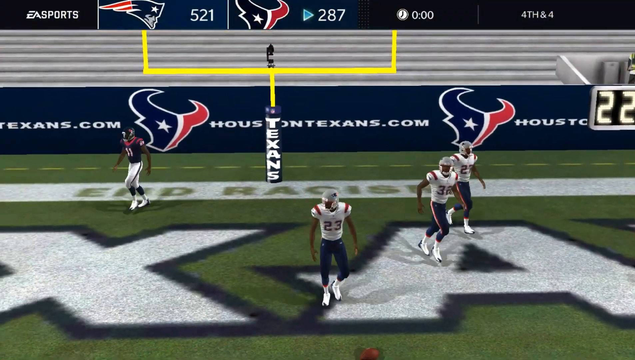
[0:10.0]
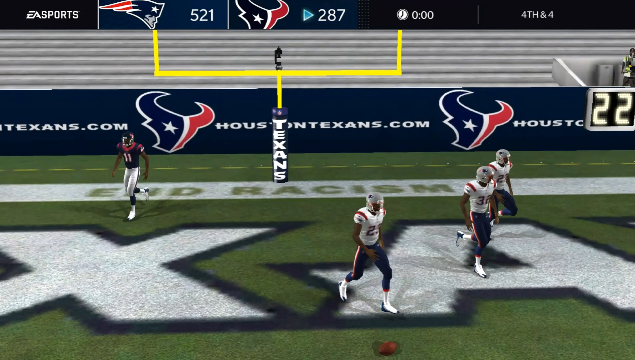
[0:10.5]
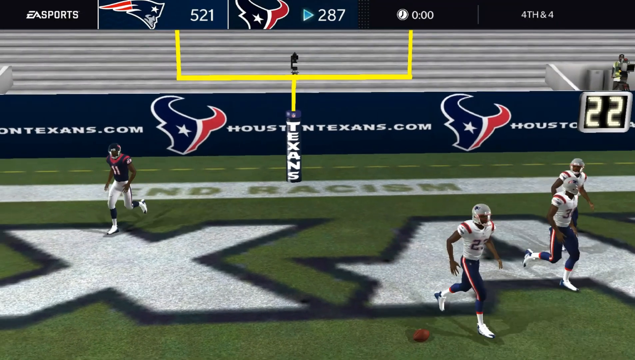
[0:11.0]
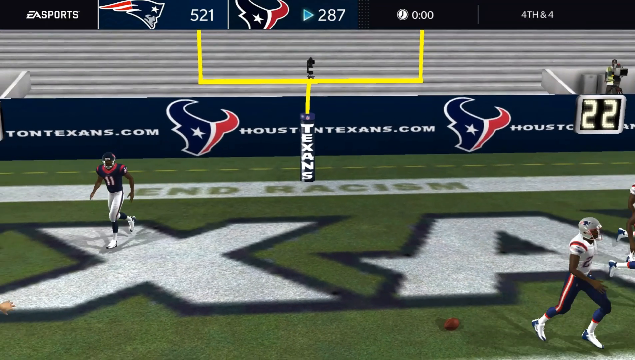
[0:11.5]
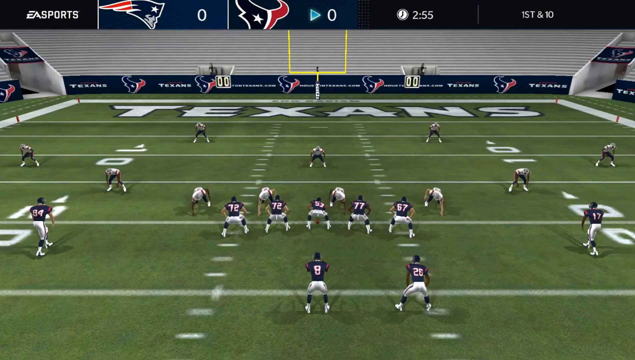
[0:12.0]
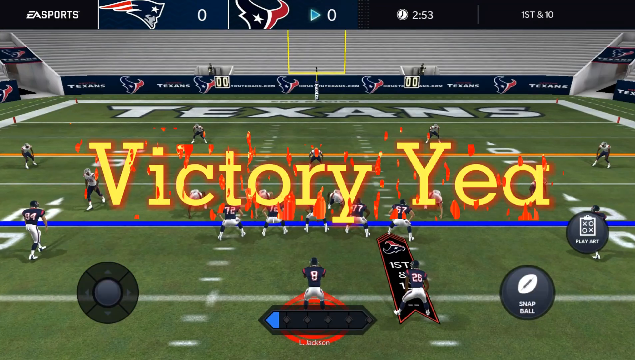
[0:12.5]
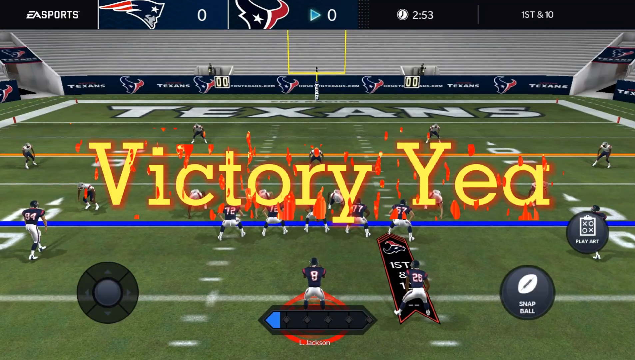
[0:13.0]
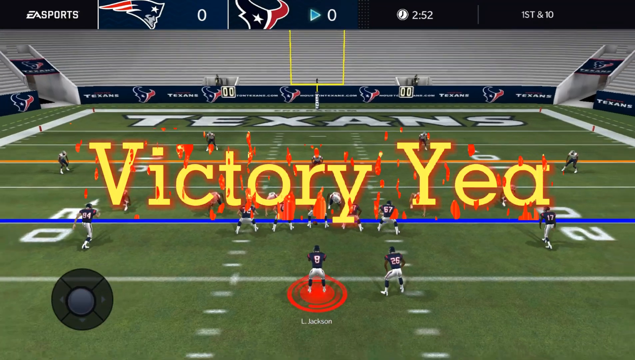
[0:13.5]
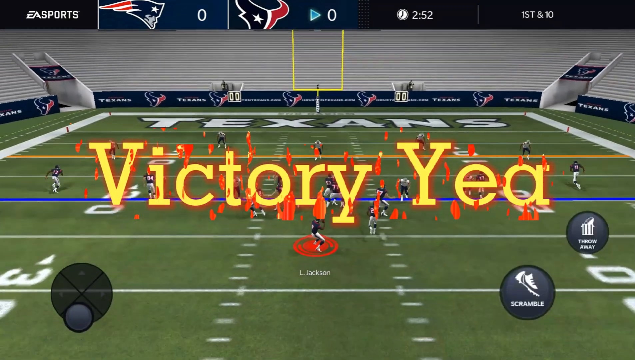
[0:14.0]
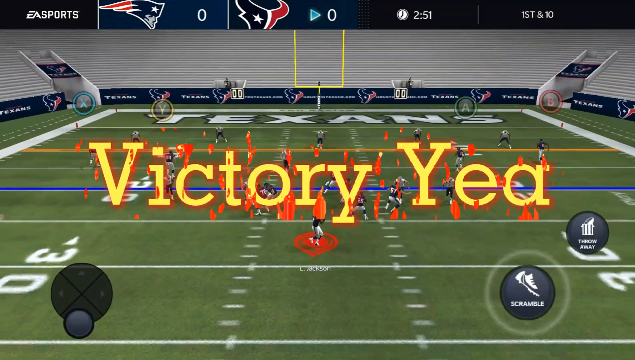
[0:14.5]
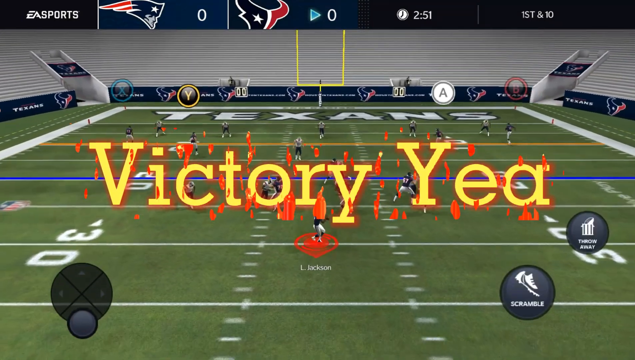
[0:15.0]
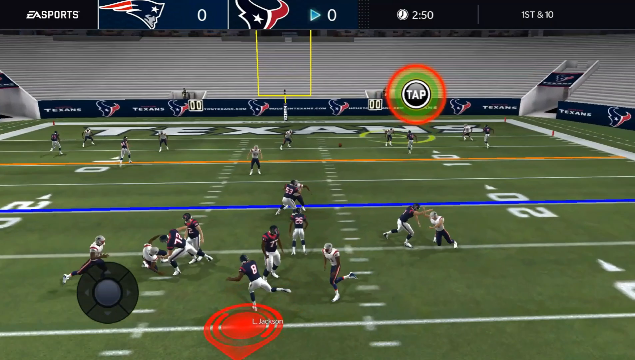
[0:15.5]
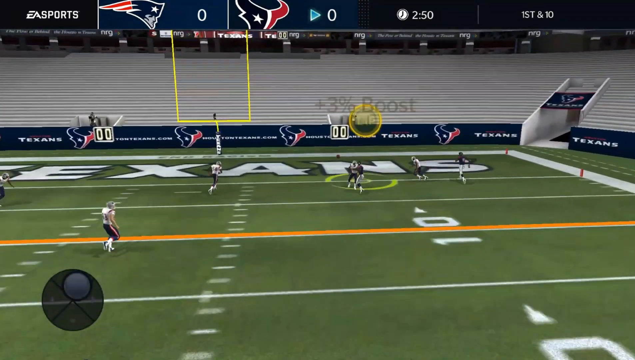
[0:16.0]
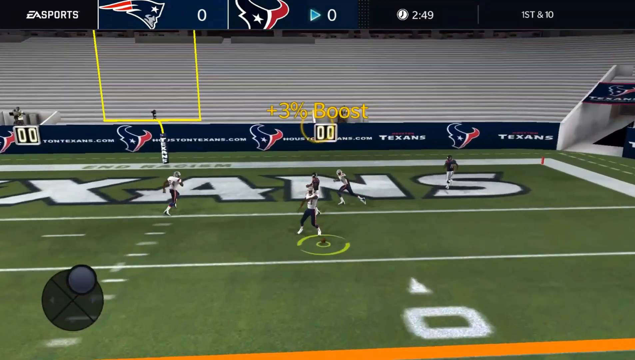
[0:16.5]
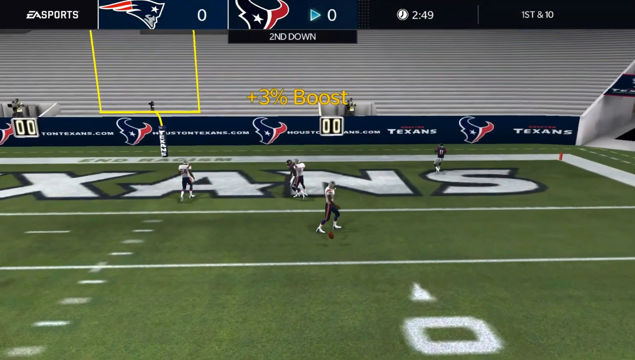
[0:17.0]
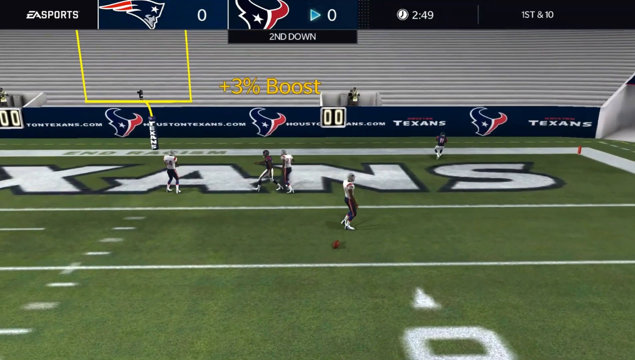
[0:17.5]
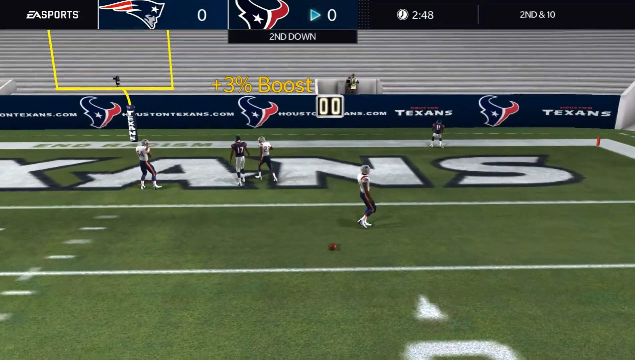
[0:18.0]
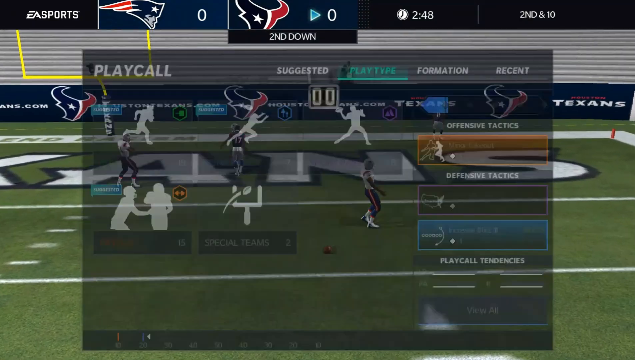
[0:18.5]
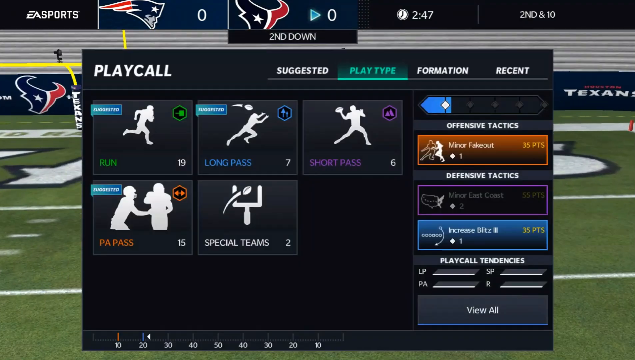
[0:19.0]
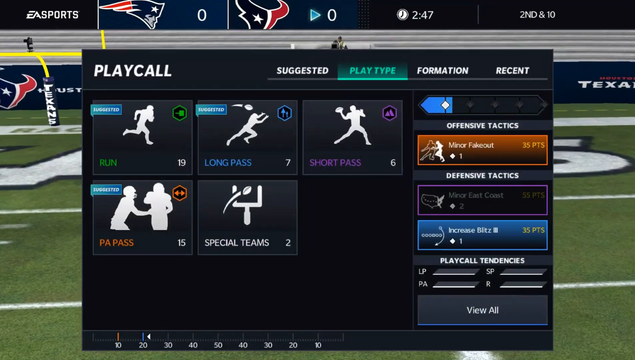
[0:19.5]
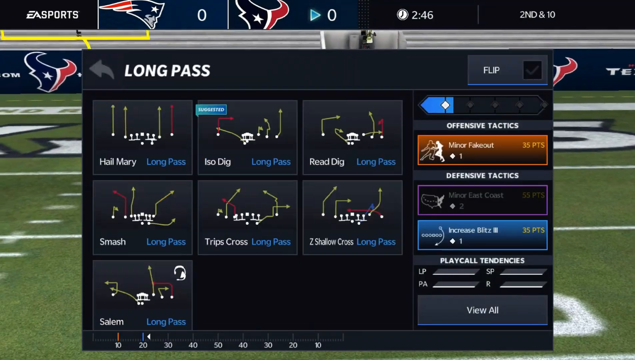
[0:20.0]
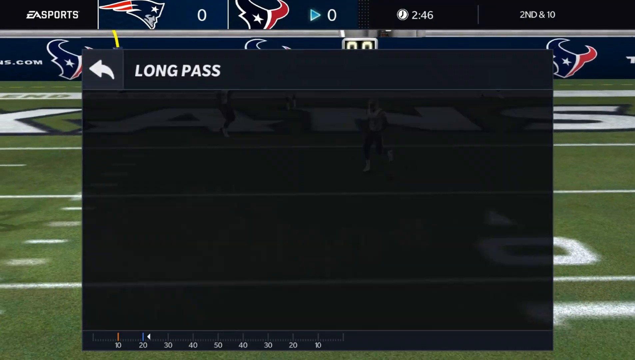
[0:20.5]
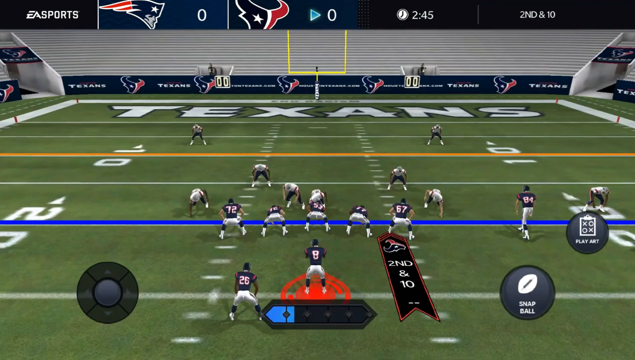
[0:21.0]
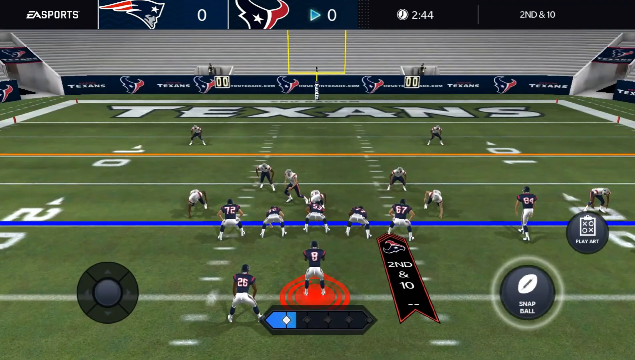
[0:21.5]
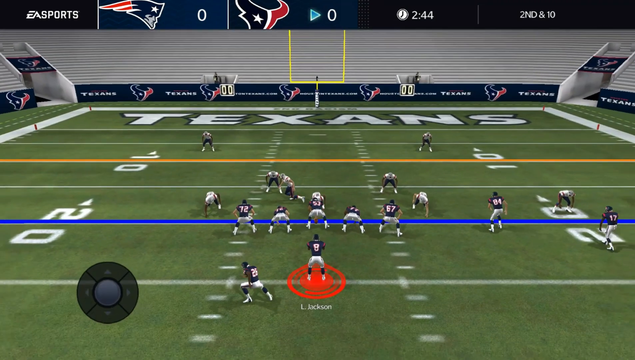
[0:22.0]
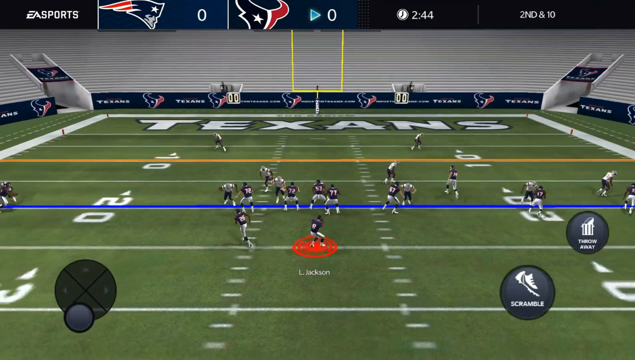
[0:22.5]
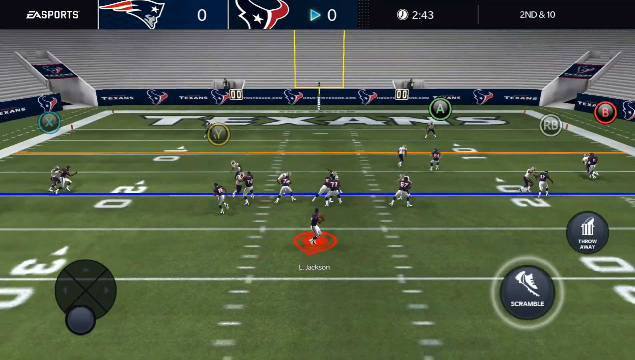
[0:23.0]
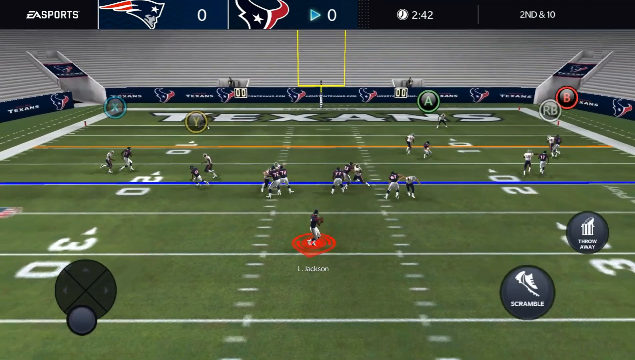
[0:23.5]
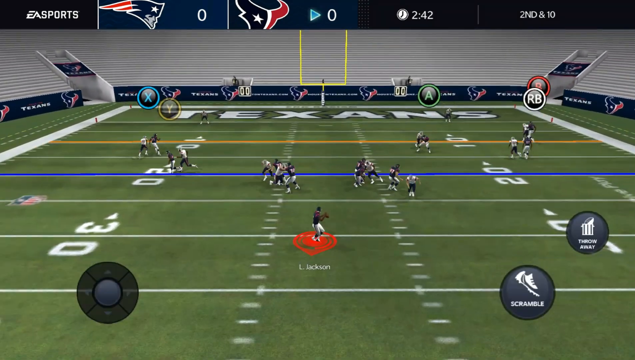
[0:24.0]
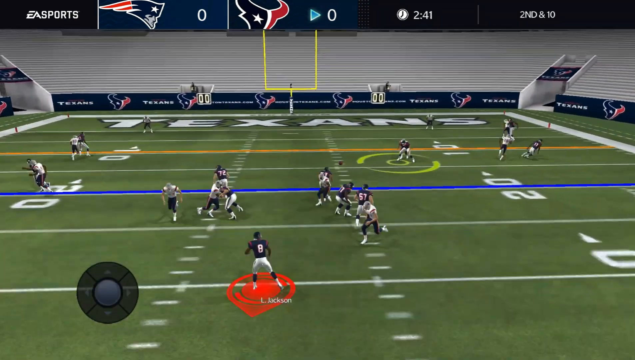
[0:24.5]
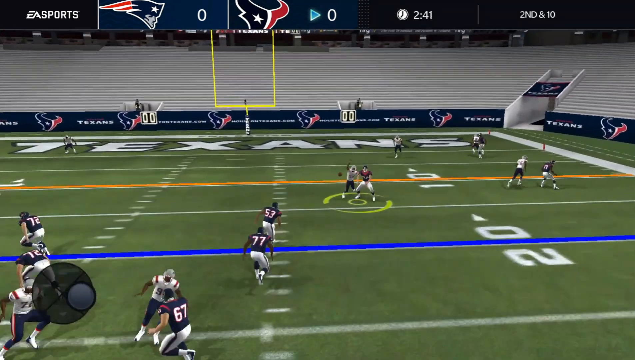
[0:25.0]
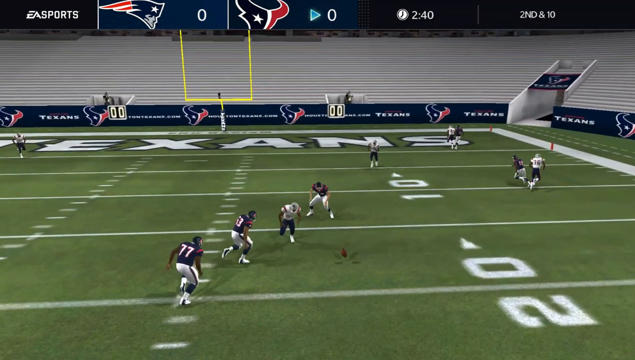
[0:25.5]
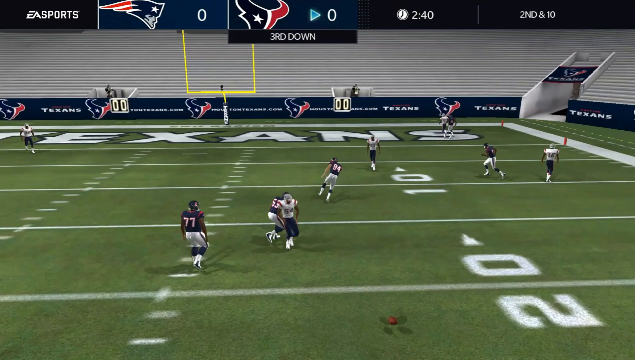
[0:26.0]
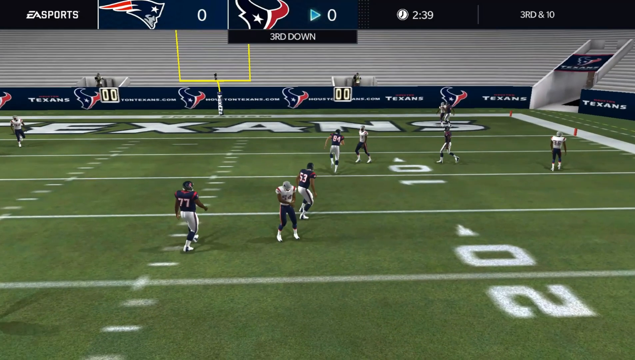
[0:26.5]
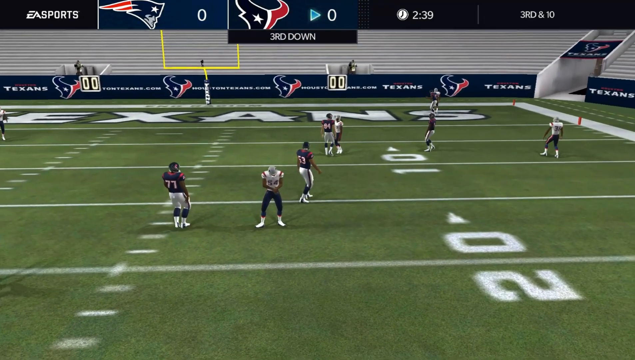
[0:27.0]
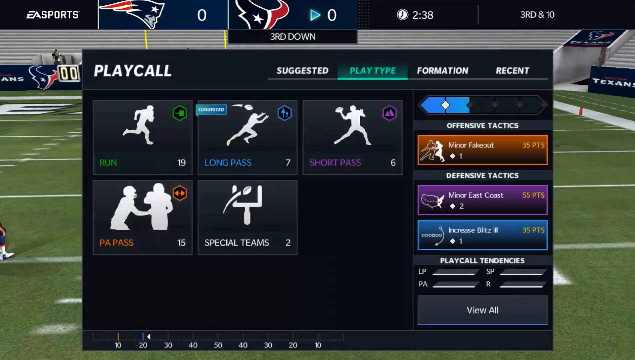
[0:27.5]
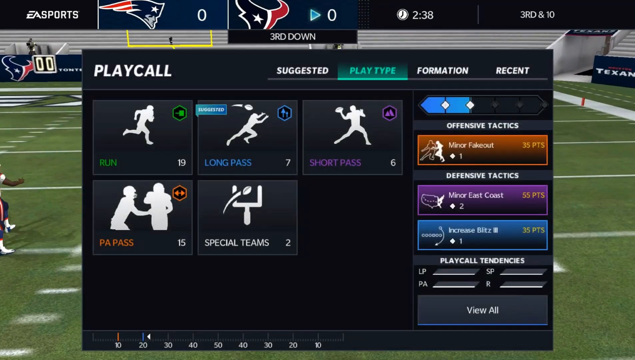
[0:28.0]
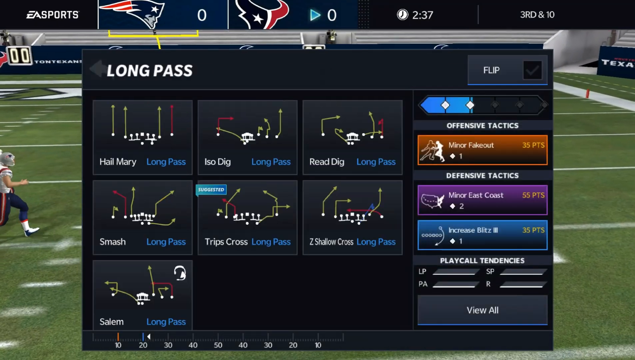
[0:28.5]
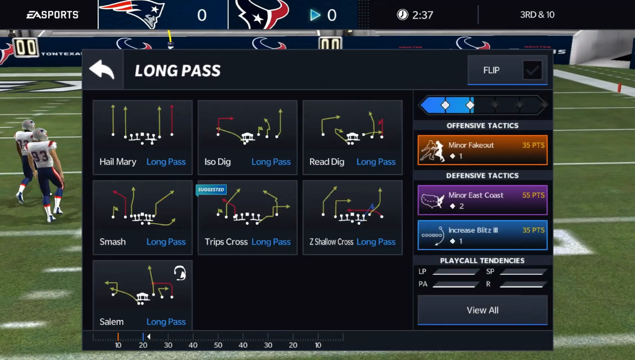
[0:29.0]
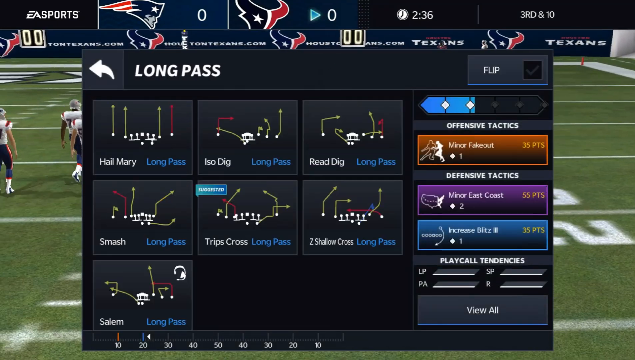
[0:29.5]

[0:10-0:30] Various player avatars walk around away from the touchdown zone. Yellow text appears reading "victory yea" and stays on the screen as the next play starts. A button tap prompt appears, and the player hits it, giving a plus 3% boost to their characters. A rectangular gray UI then pops up with options for play types and tactics the player can select. The play types are run, long pass, short pass, PA pass, and special teams, with run, long pass, and PA pass marked as suggested. The tactics include entries reading "offensive tactics, minor fakeout" and "increased blitz". The player selects long pass, which shows various strategies they can choose.